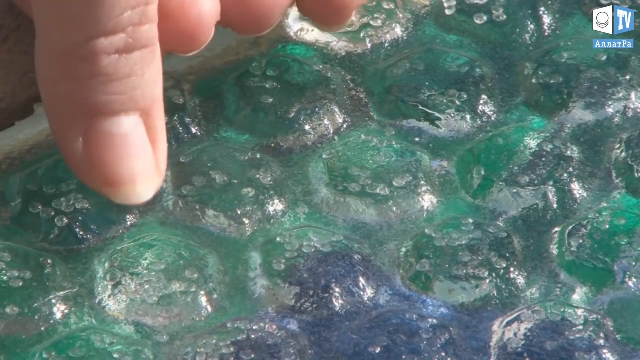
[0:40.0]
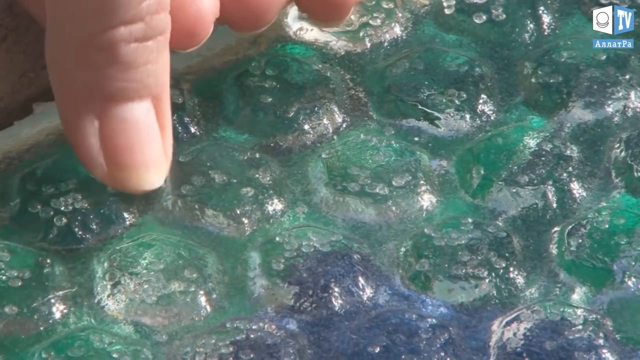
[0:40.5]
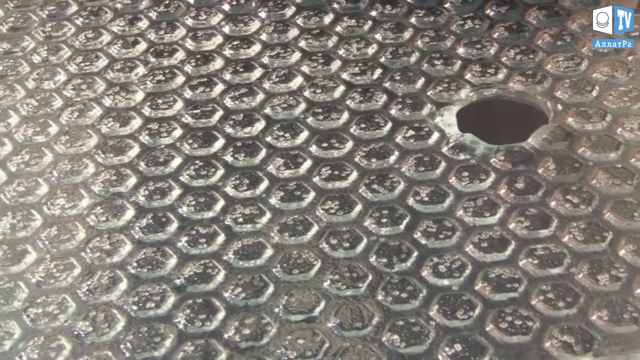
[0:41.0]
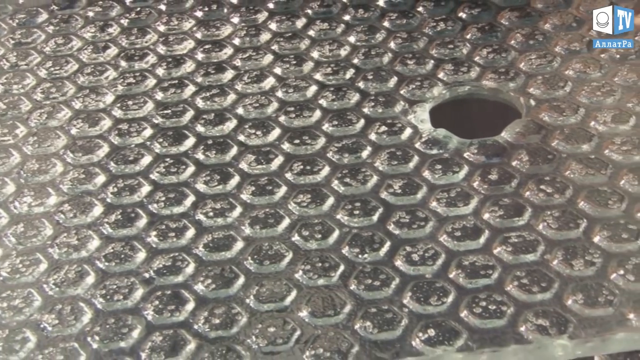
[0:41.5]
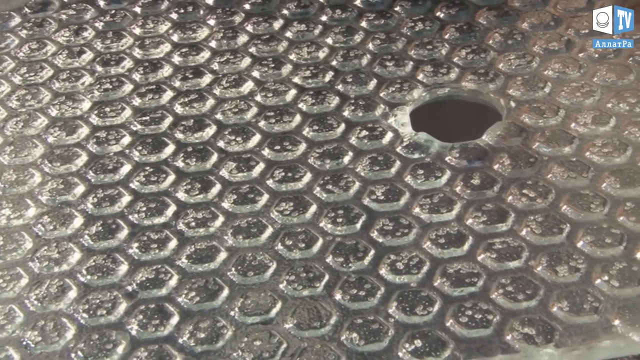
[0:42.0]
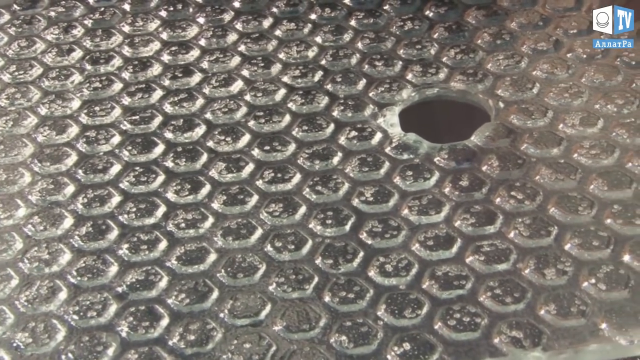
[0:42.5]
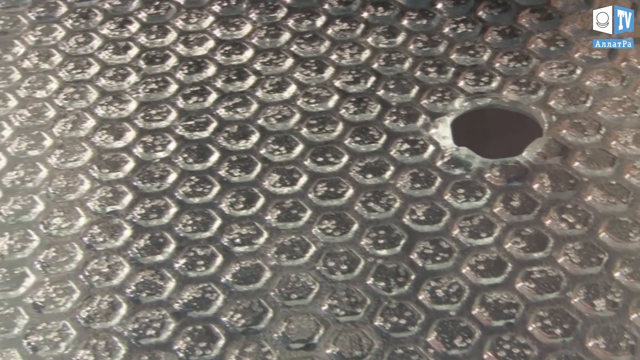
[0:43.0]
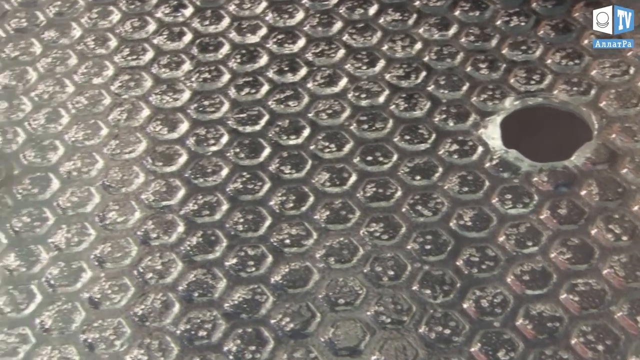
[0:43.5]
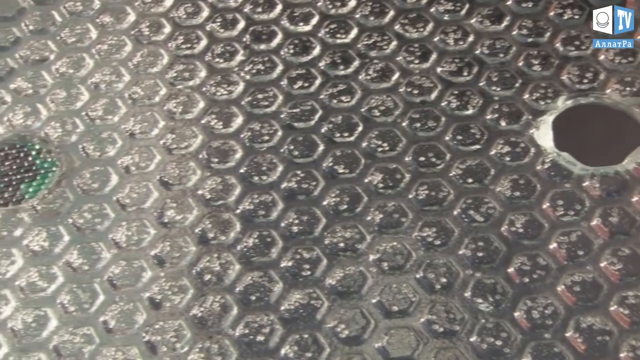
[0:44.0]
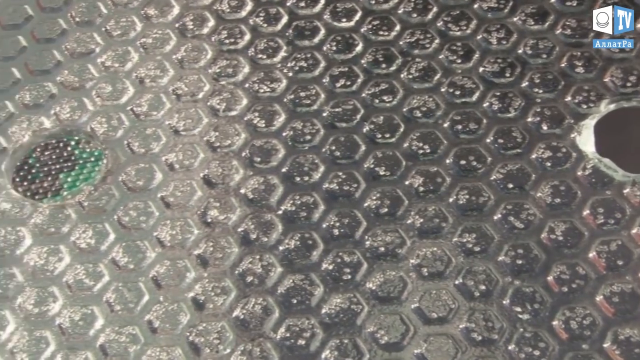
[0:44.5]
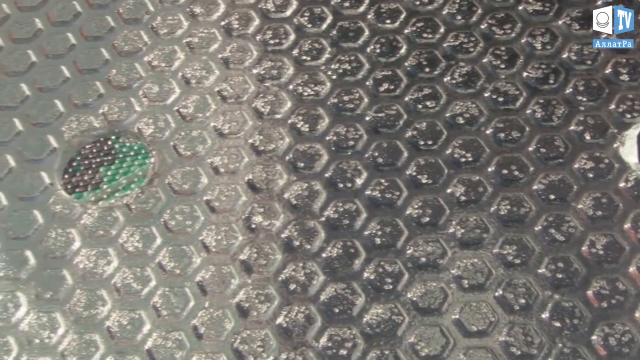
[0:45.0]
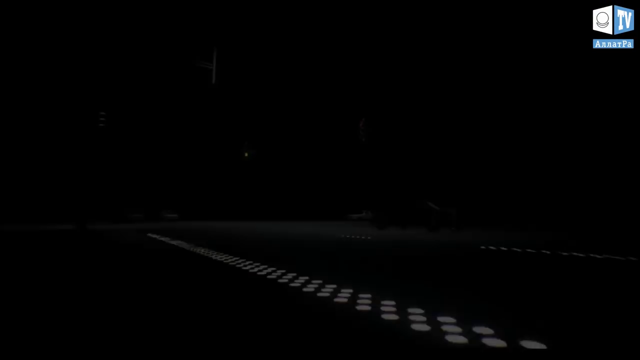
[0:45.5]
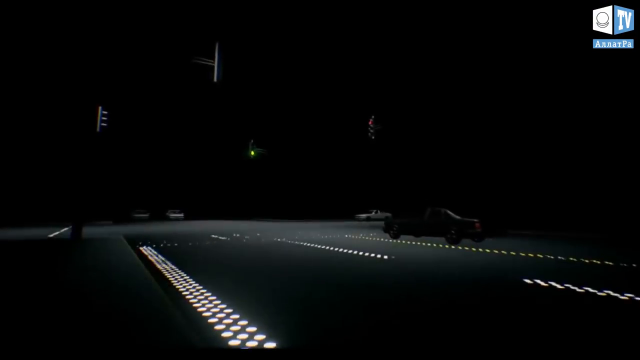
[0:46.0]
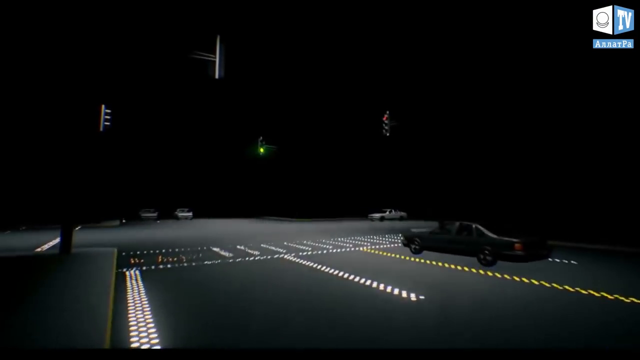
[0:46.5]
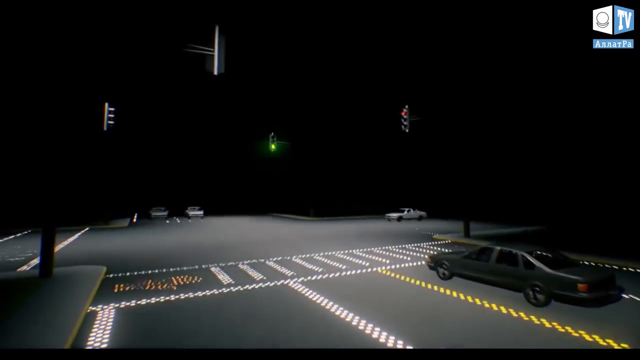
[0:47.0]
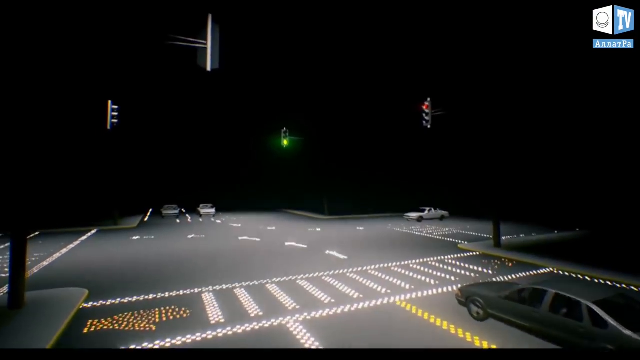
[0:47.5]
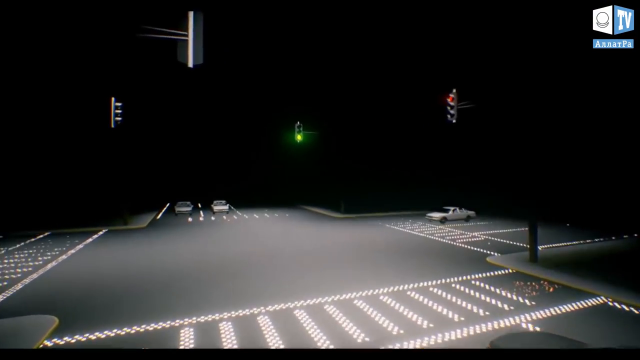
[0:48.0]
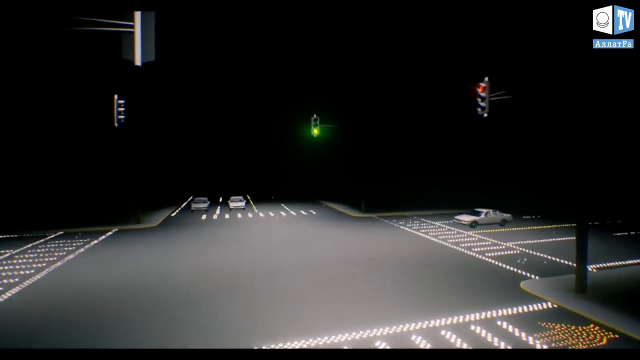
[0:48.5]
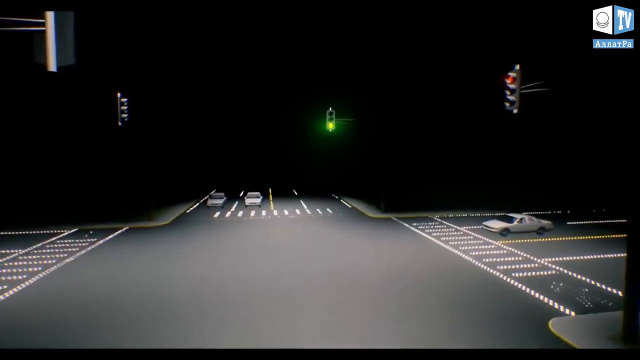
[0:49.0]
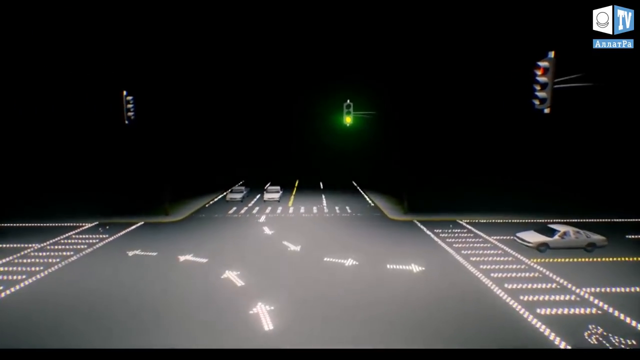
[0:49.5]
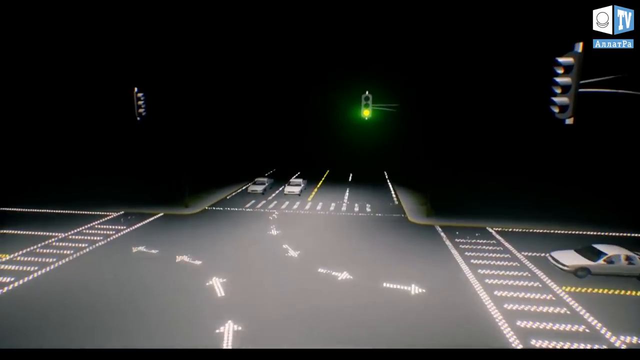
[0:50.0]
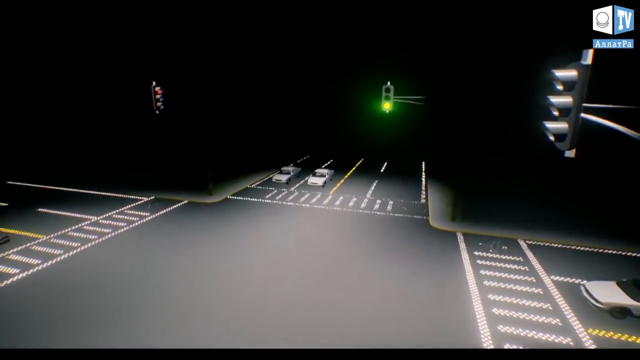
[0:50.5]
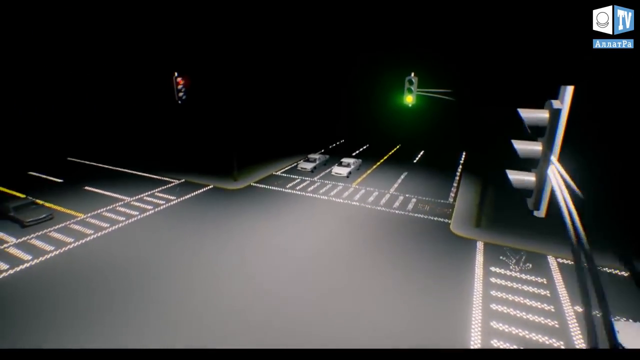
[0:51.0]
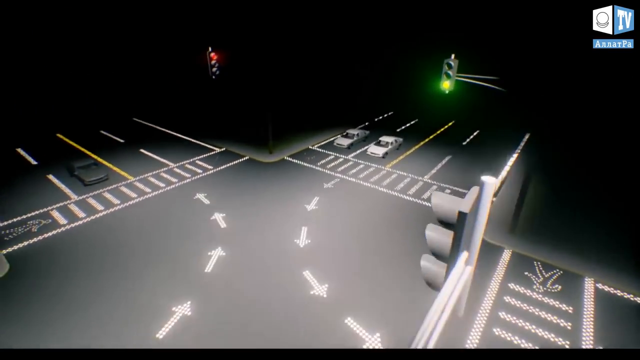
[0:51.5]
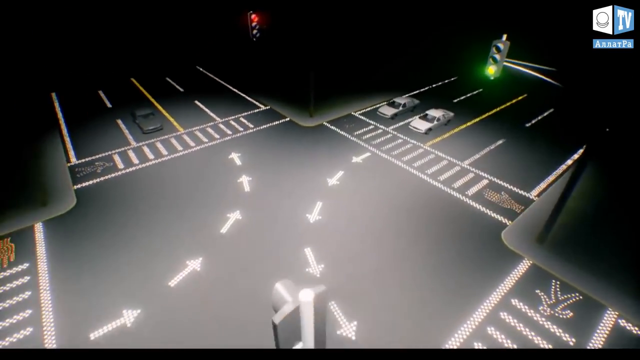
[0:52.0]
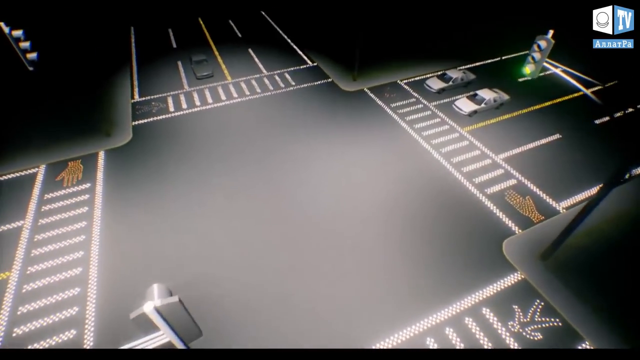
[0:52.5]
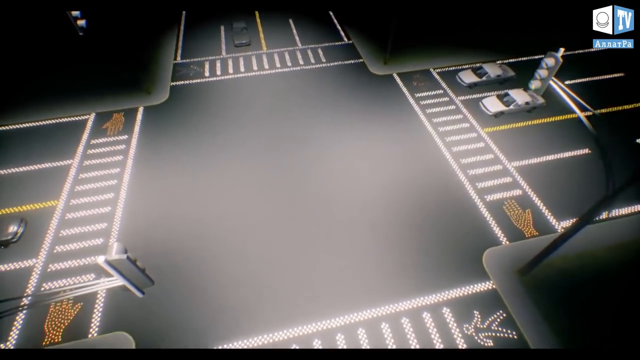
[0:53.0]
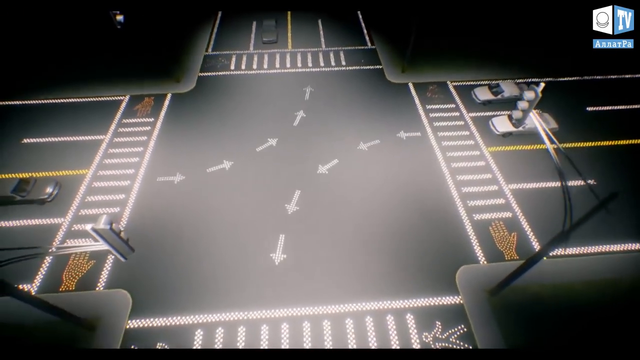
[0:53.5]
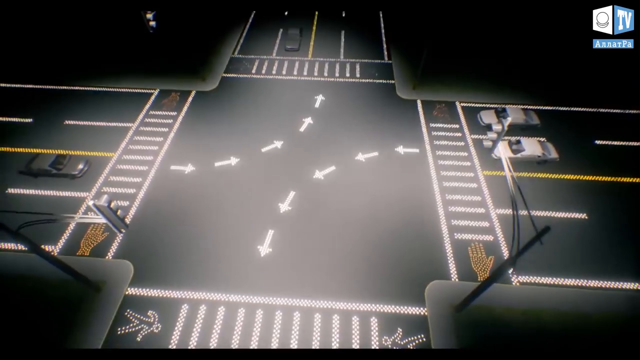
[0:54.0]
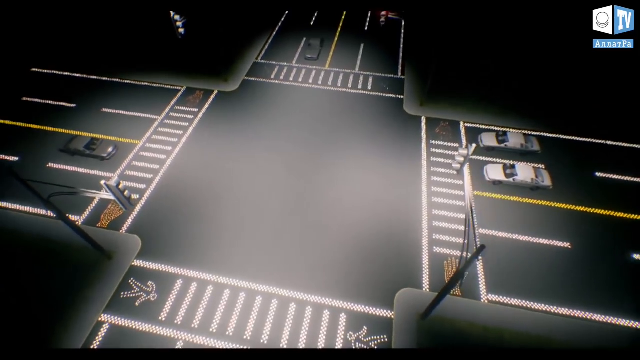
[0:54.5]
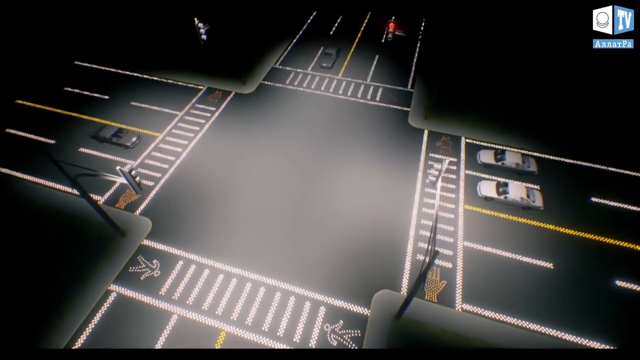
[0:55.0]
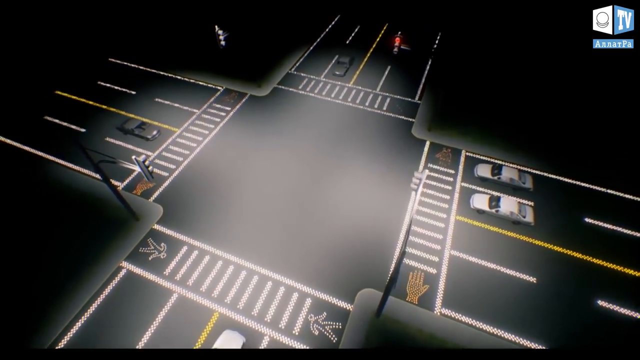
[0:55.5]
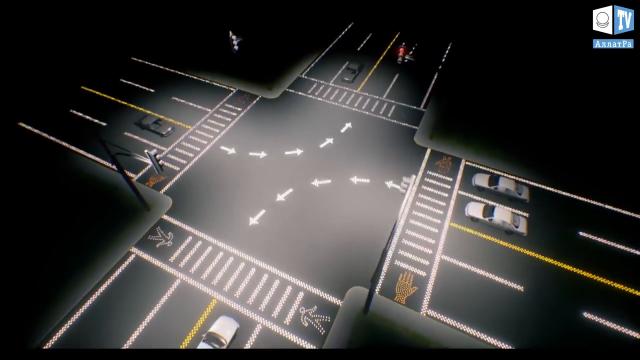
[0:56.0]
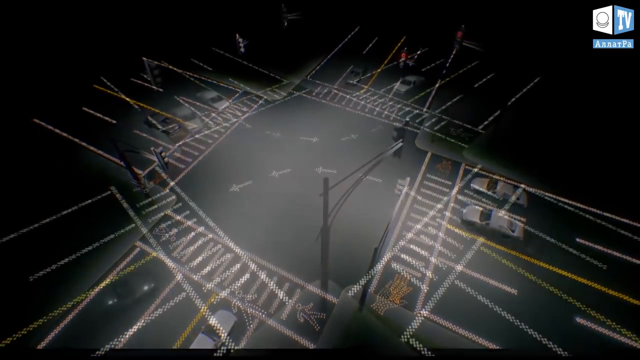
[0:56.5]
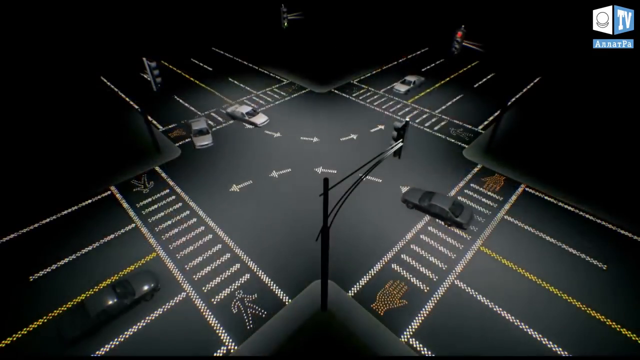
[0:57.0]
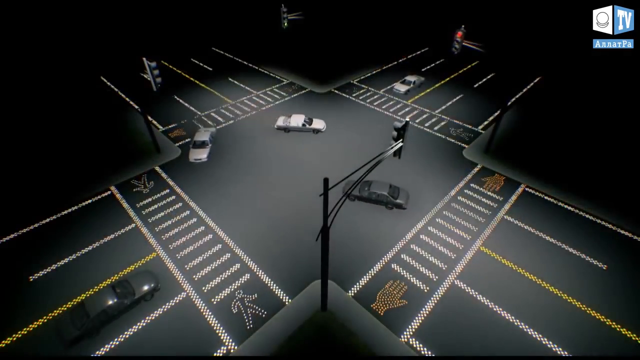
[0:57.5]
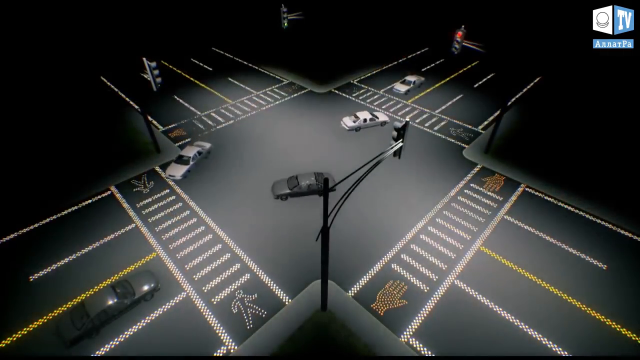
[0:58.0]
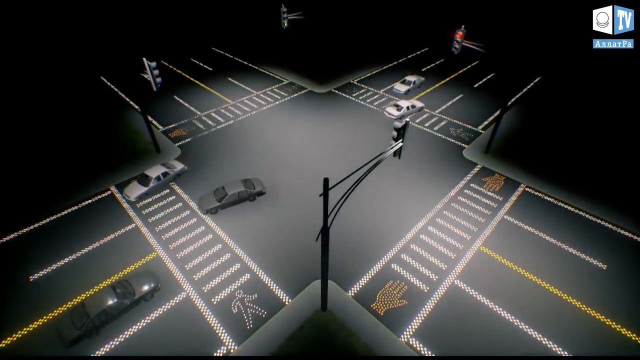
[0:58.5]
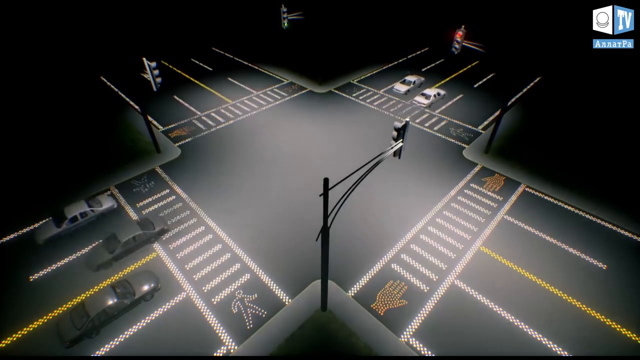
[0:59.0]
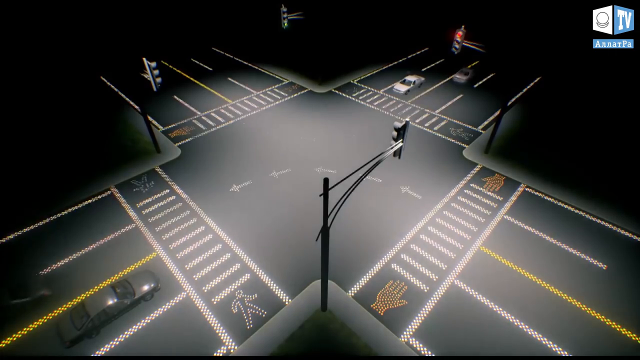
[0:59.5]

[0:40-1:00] The blue mat and the different-language text in blue bubble letters appear. The man moves the mat, and text at the bottom says "install eco raster". The bottom of the mat is shown; it apparently goes in front of their house. The man wears a blue shirt. There are lots of cars on the side, and then an open road and a highway, followed by a number of different roads. A man works in an office, making octagon-like shapes, and there is bubble wrap. A computer-animated road follows: it is black, with lights and cars on it, and it comes to an intersection with cars driving on the side. Octagon shapes form some sort of carpet. Then a flowing creek with lots of water appears, followed by dripping blue water and a vast valley field, like a field where crops would be grown.